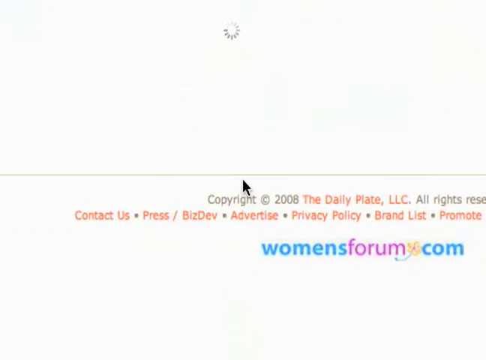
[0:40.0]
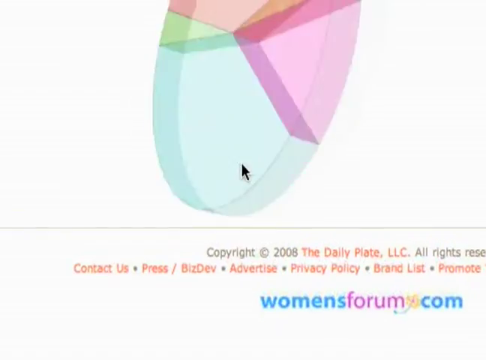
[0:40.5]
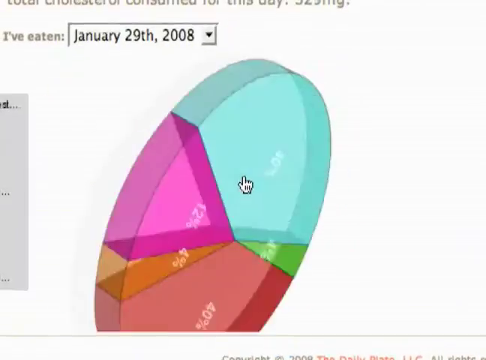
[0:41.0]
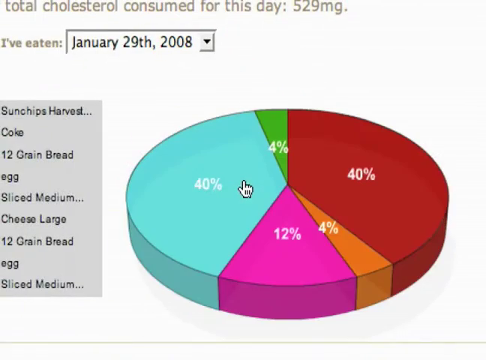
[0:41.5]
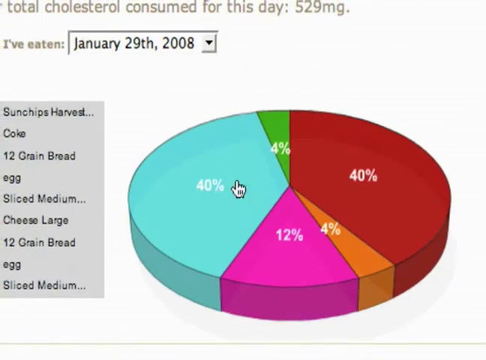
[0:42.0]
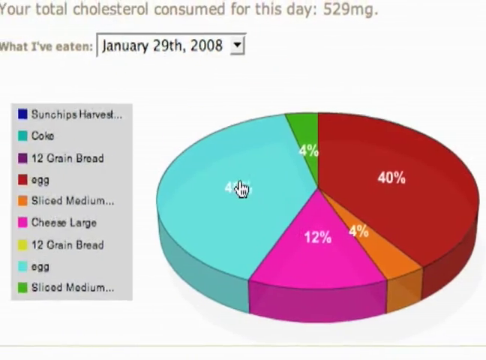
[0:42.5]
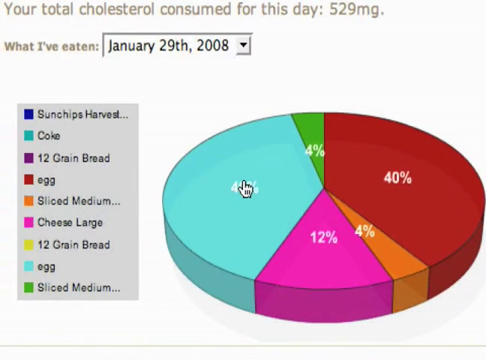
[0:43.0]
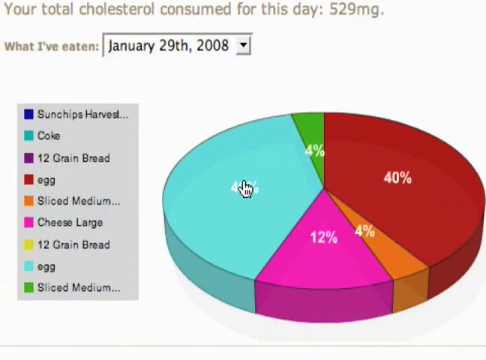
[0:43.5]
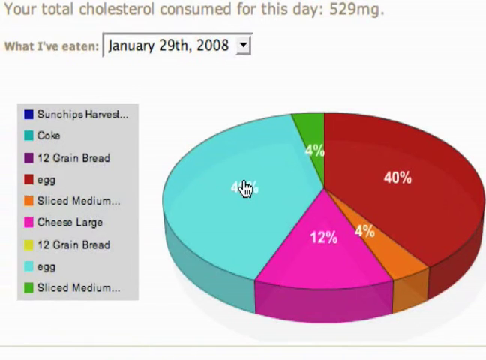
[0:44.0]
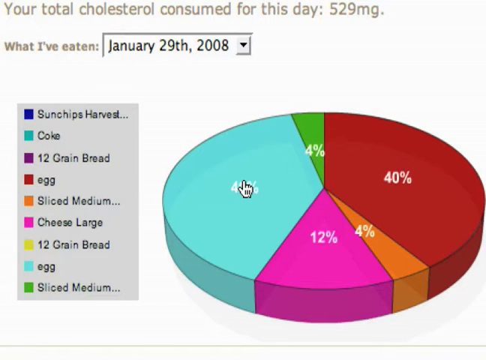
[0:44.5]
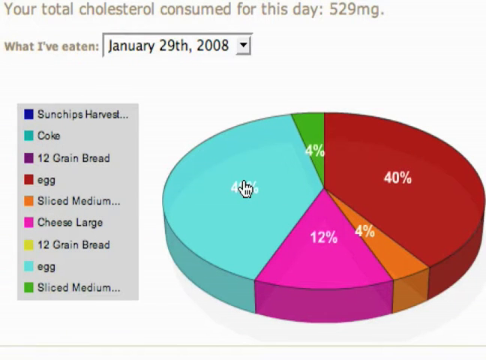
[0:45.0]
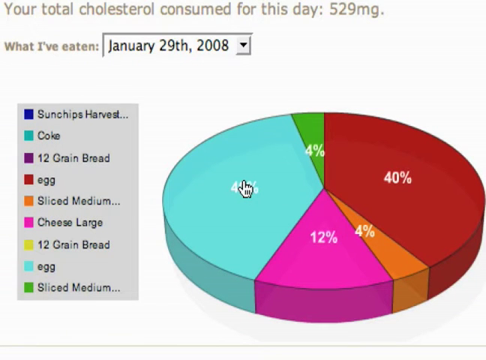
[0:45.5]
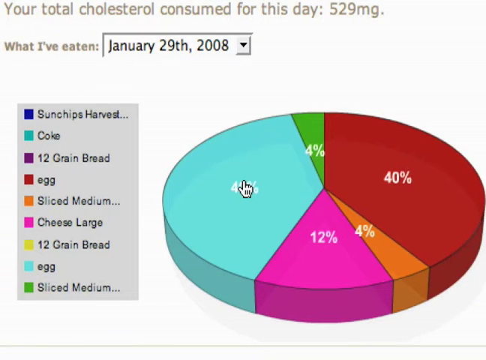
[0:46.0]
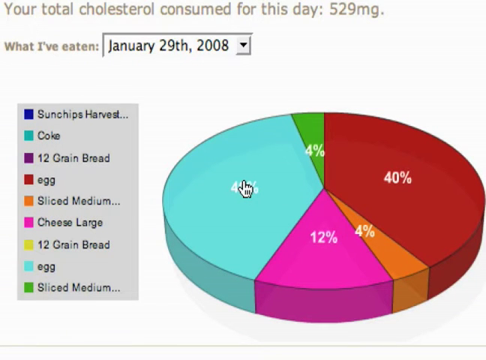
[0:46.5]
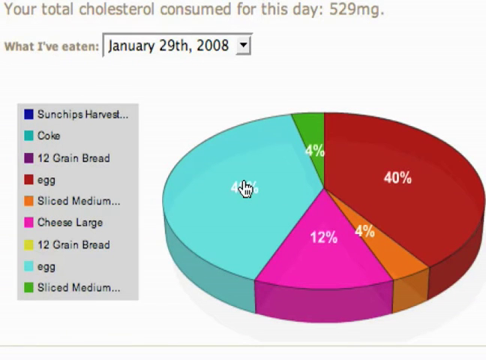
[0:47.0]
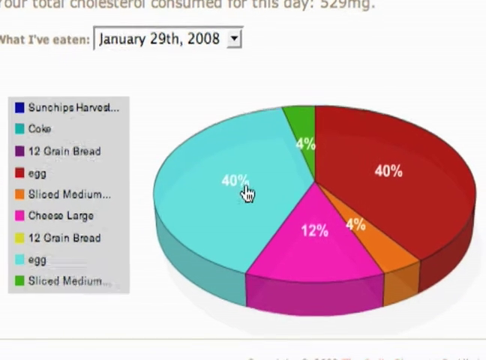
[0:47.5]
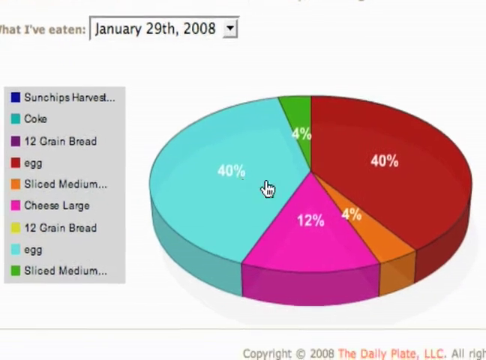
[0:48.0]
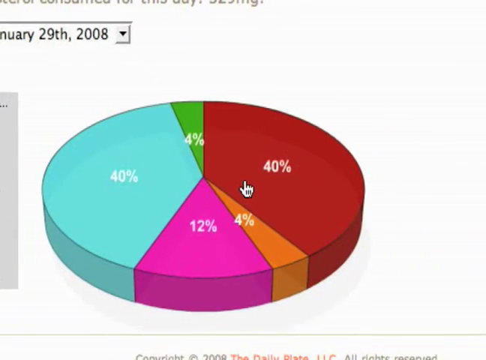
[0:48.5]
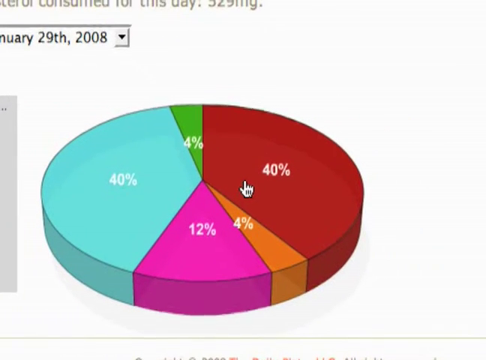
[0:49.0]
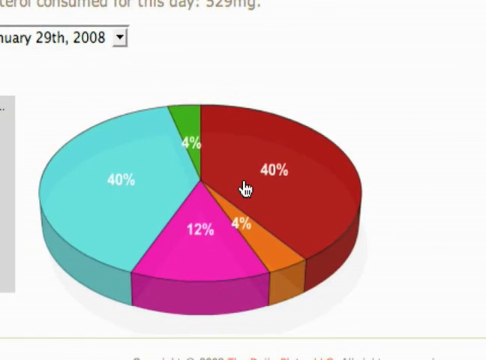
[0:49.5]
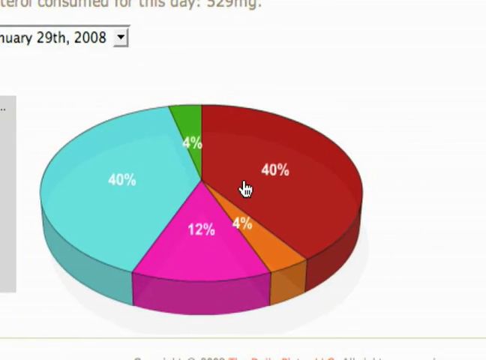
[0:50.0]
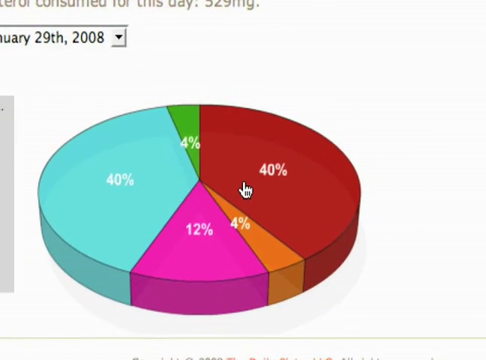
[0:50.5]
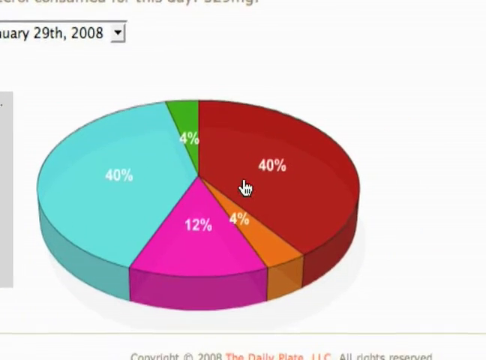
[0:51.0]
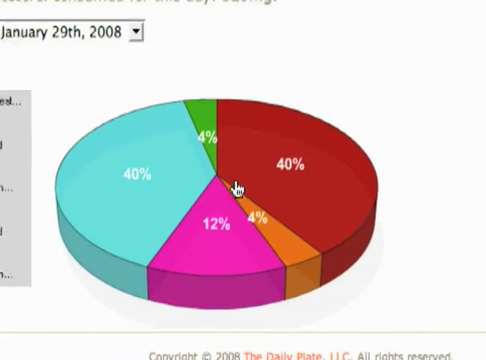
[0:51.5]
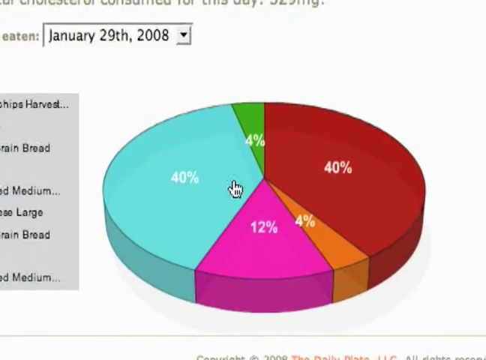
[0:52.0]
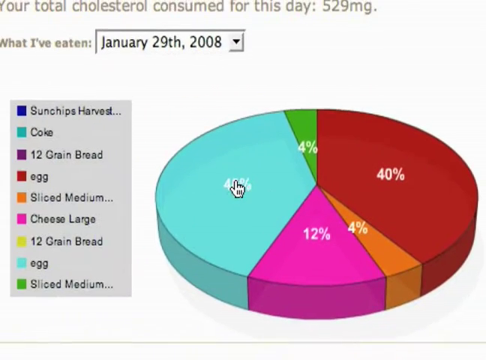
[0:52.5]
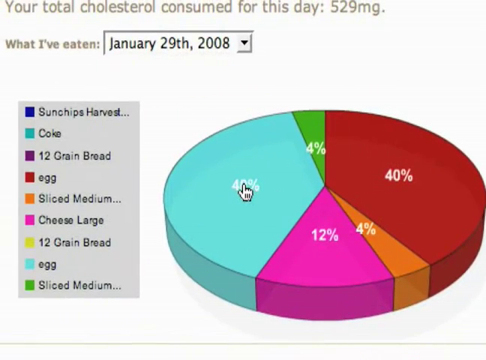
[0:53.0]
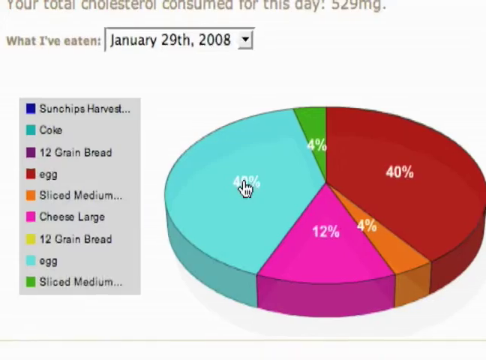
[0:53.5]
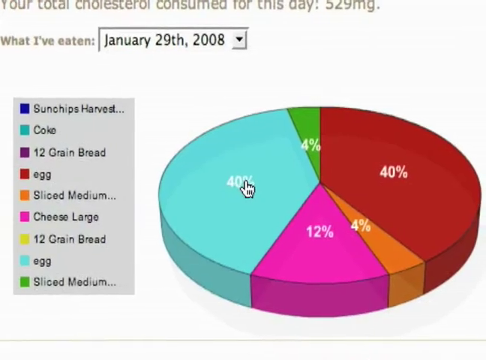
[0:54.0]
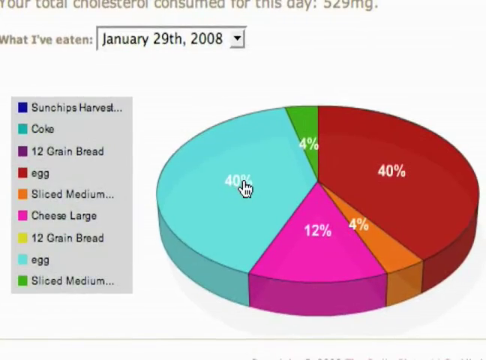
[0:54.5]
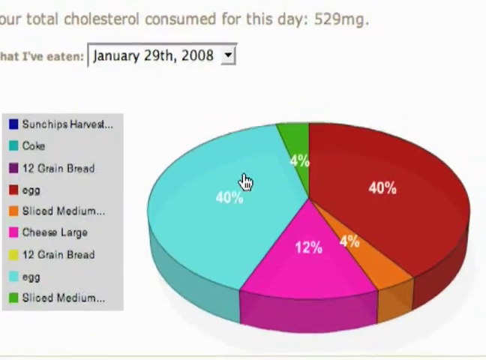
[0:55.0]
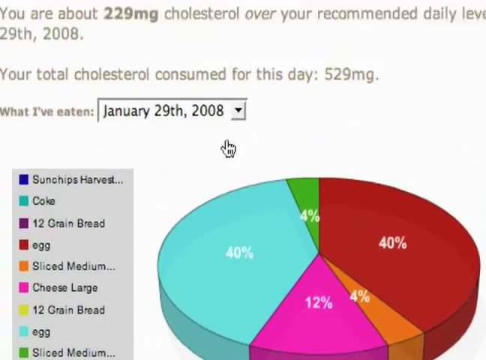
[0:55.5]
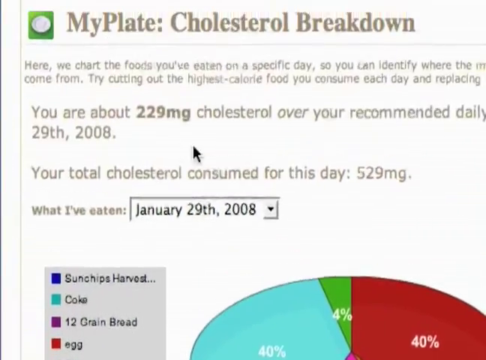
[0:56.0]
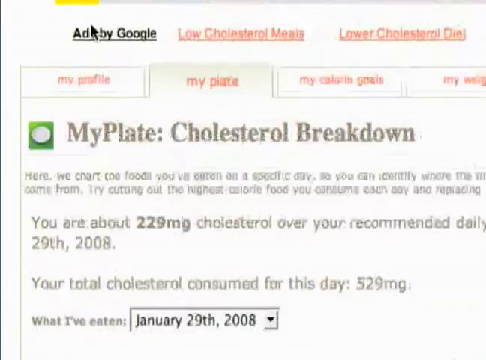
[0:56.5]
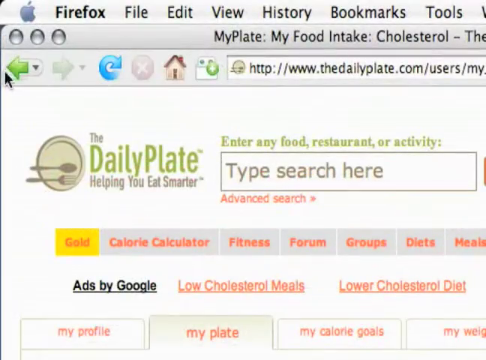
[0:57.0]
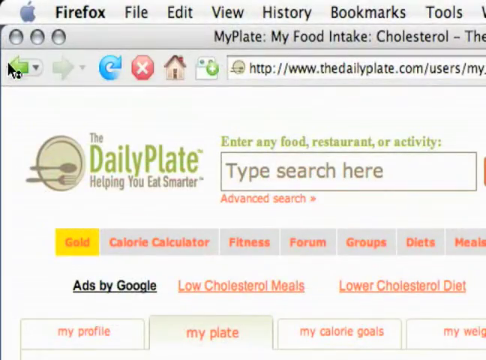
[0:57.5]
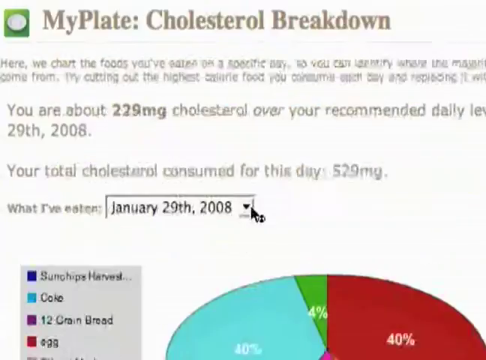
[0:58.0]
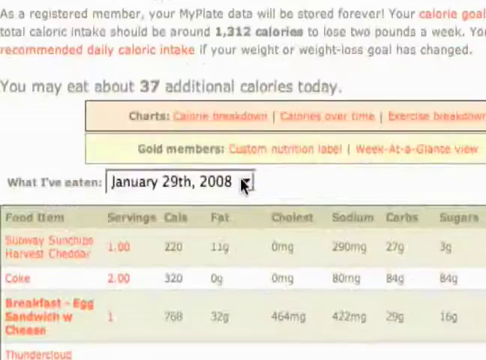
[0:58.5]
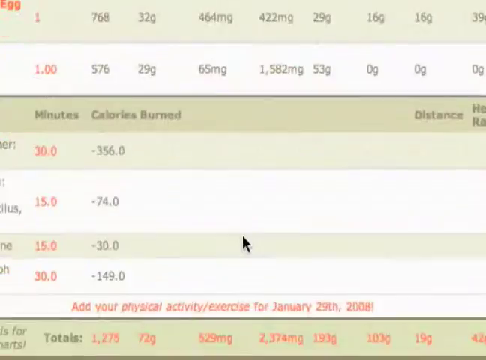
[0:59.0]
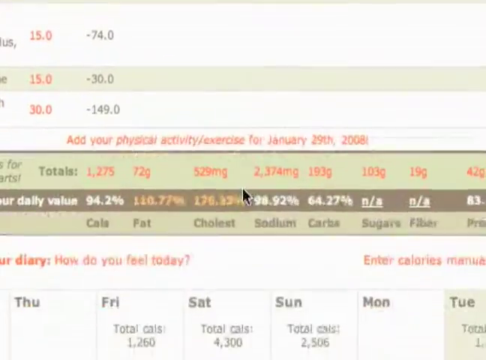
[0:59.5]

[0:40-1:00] After the 529 milligrams link is clicked, a pie chart appears on the screen with a sort of twirly animation, almost rotating before settling flat. It shows the total cholesterol consumed for the day, 529 milligrams, broken down into its components. The user hovers over a 40% section, the icon changing to a little glove; this section relates to an egg. The user moves across to the other 40% section, which is orangey-red and relates to another egg. The user then goes to the top of the screen and clicks the browser's Back button, returning to the previous screen listing the various attributes, including the 529 milligrams.